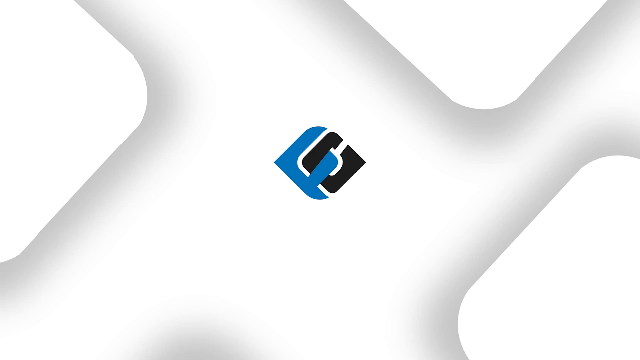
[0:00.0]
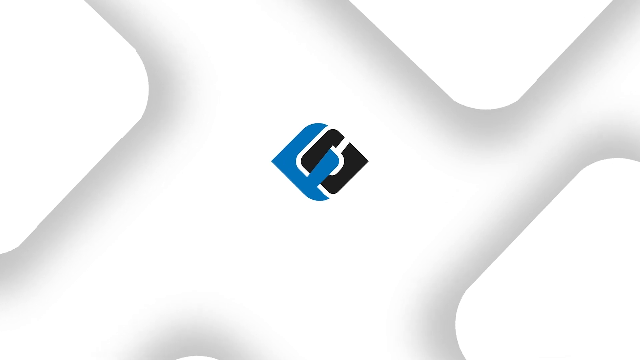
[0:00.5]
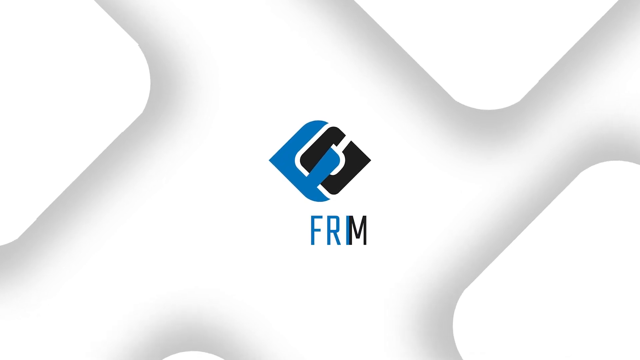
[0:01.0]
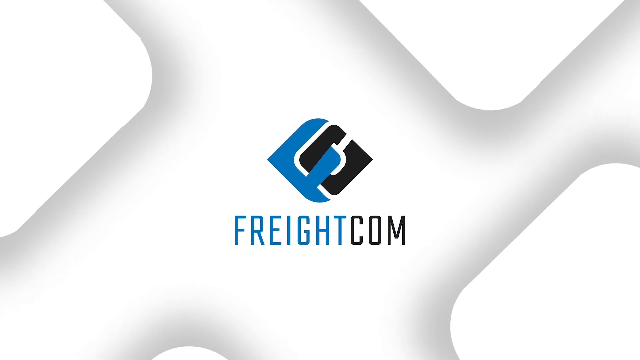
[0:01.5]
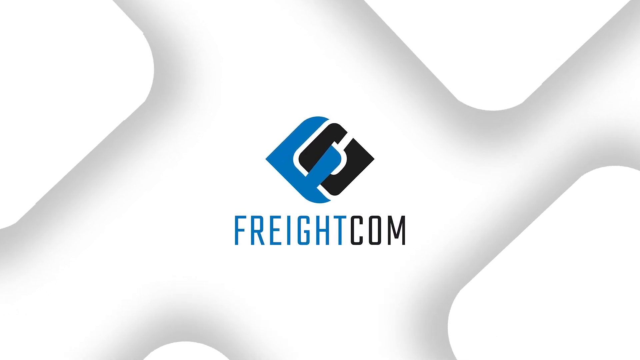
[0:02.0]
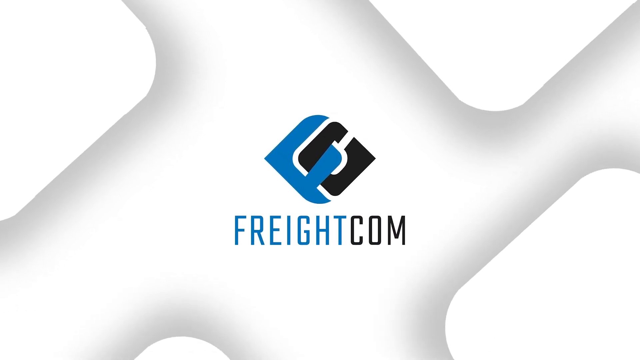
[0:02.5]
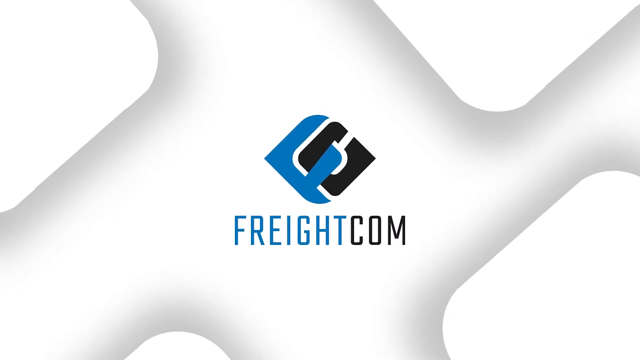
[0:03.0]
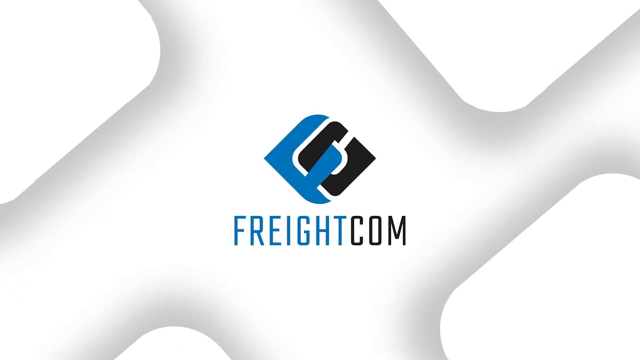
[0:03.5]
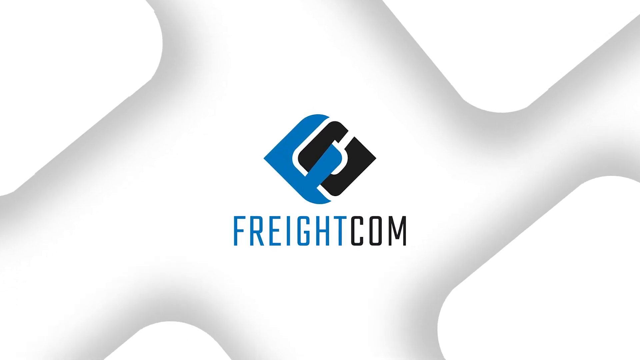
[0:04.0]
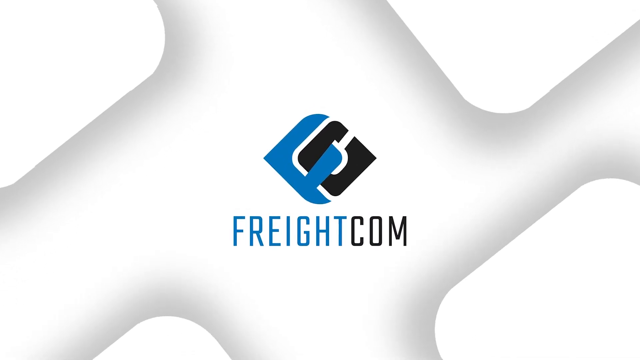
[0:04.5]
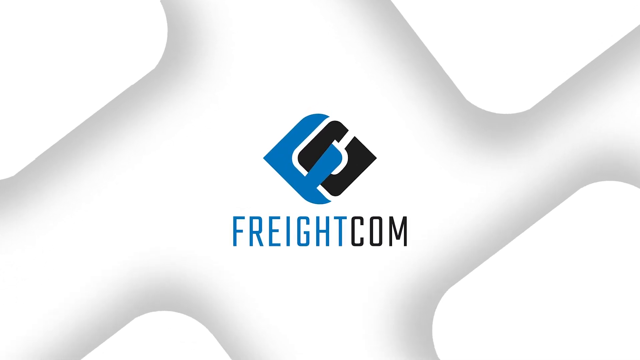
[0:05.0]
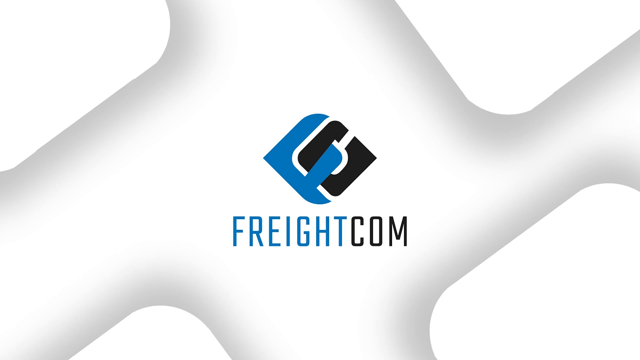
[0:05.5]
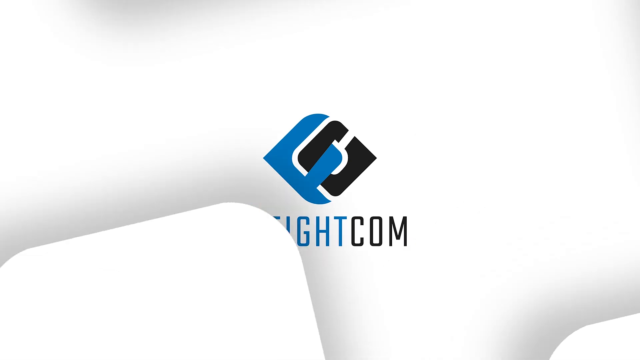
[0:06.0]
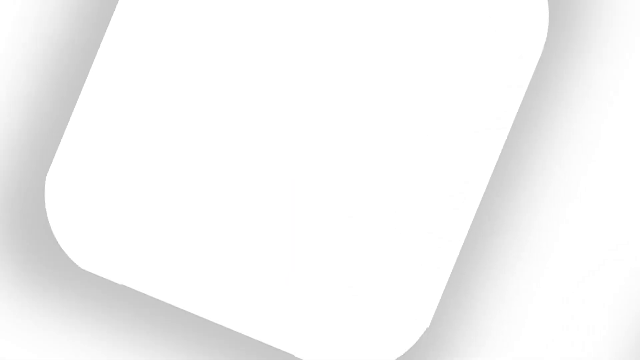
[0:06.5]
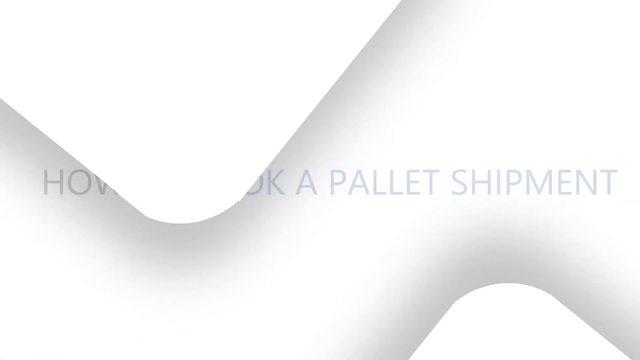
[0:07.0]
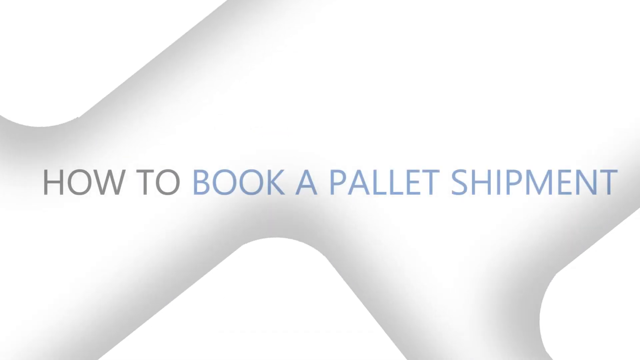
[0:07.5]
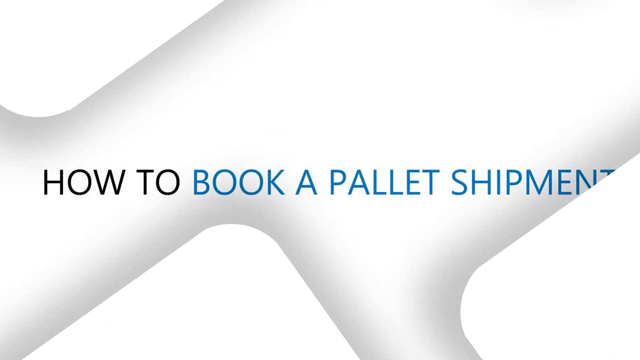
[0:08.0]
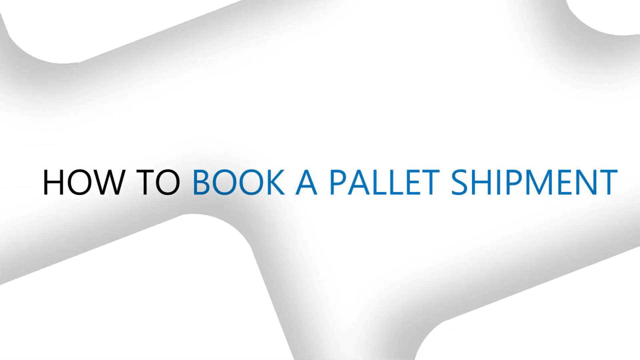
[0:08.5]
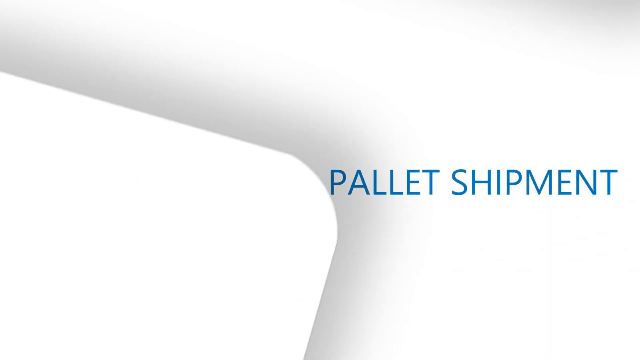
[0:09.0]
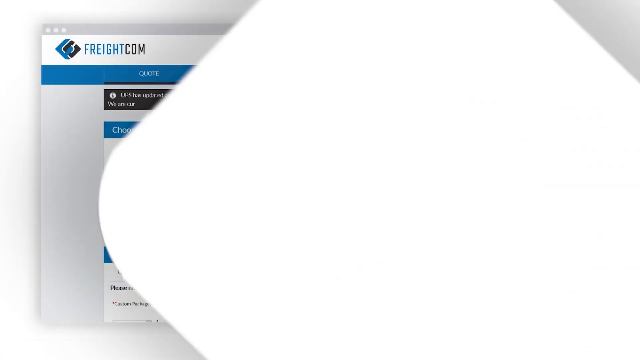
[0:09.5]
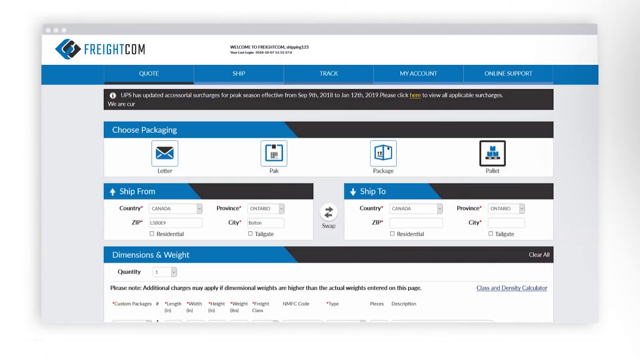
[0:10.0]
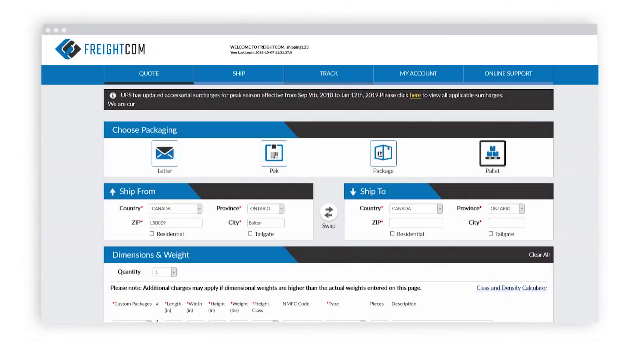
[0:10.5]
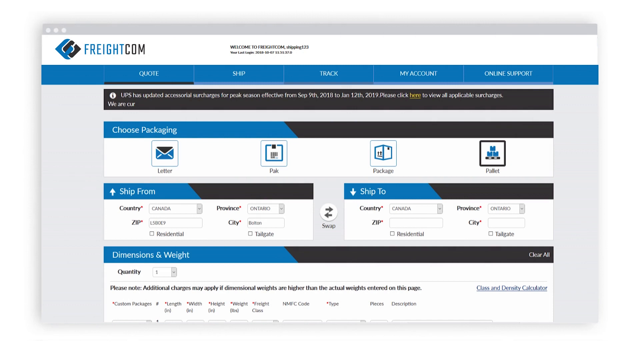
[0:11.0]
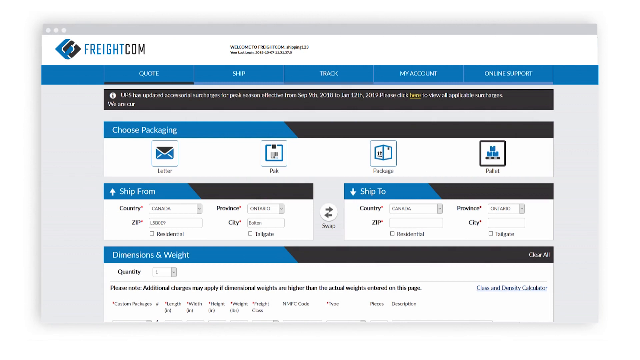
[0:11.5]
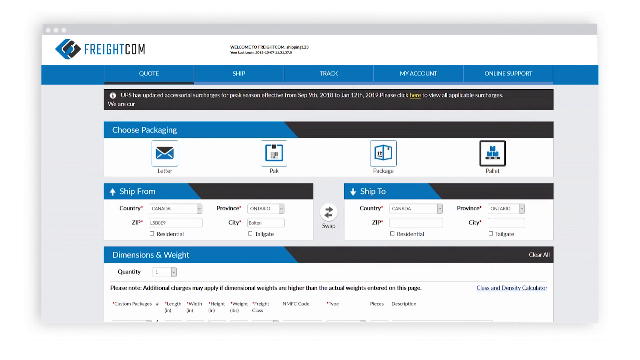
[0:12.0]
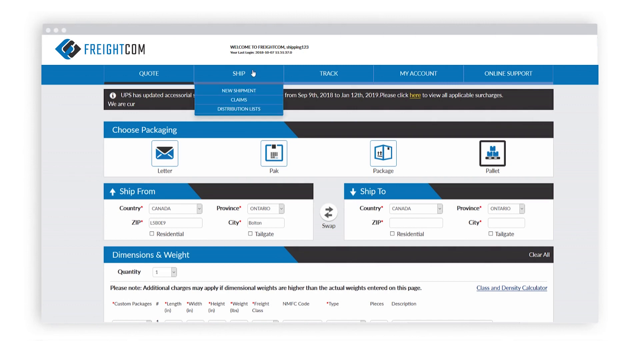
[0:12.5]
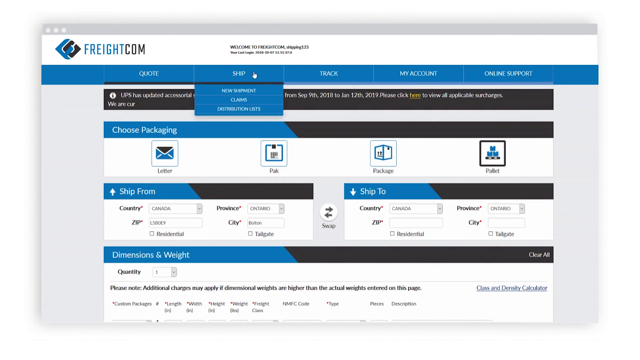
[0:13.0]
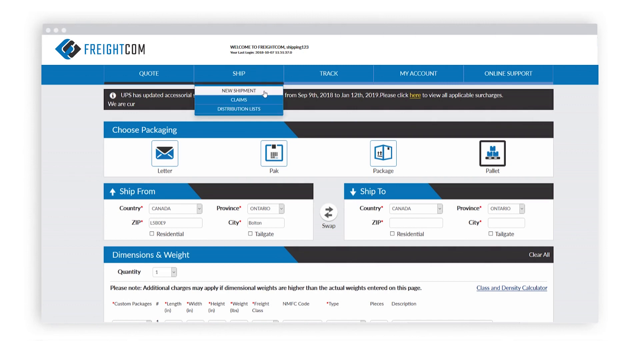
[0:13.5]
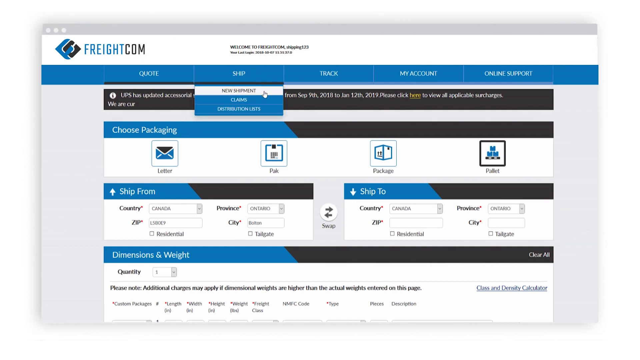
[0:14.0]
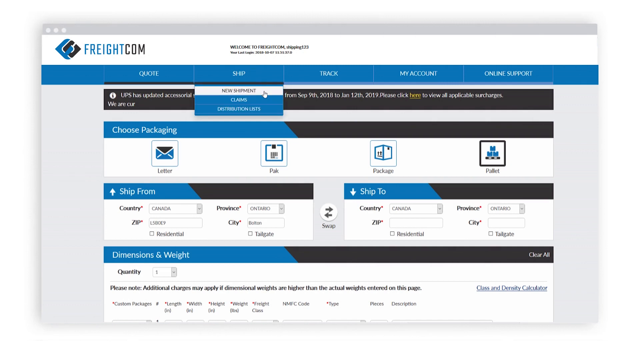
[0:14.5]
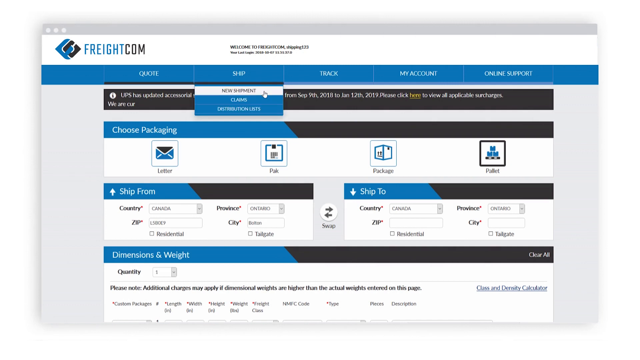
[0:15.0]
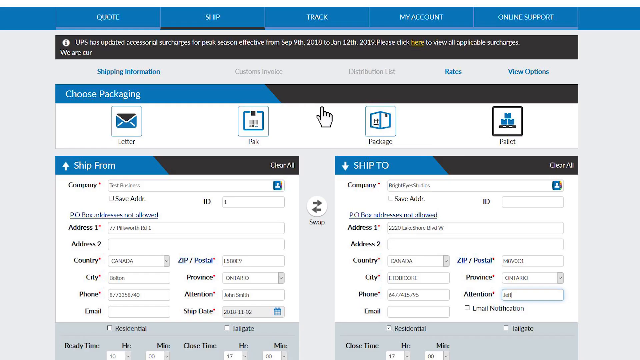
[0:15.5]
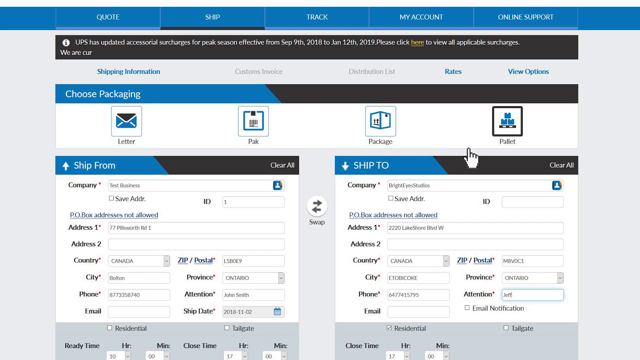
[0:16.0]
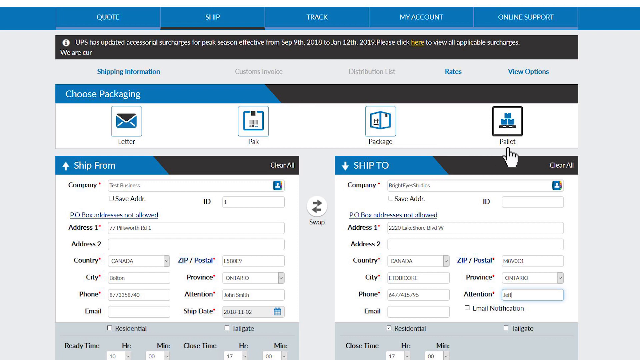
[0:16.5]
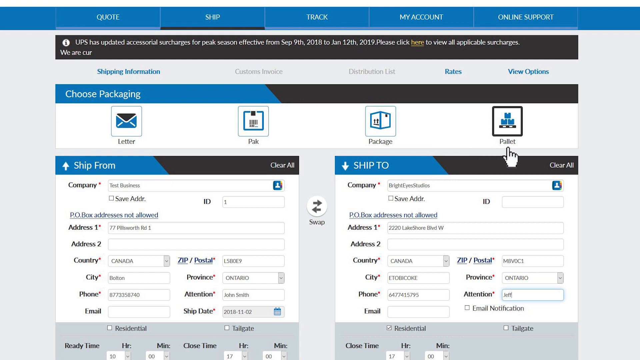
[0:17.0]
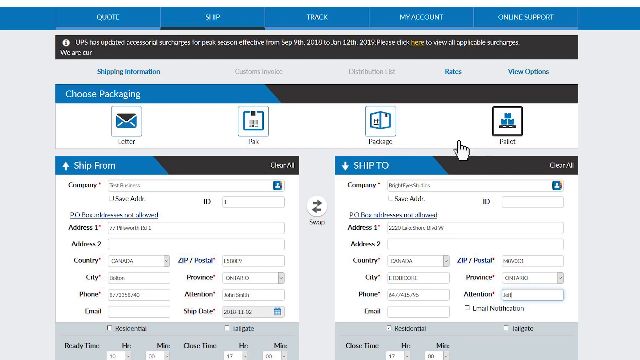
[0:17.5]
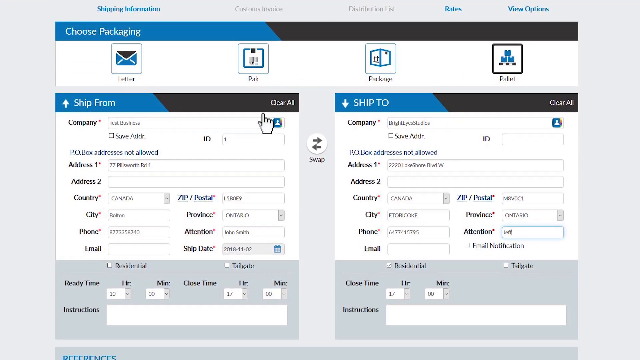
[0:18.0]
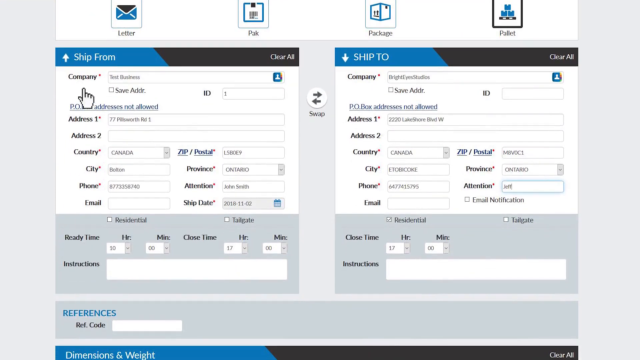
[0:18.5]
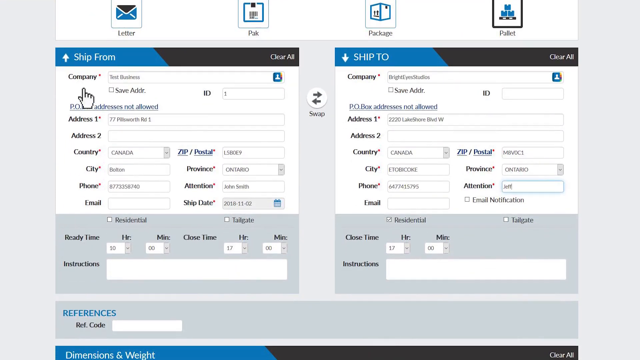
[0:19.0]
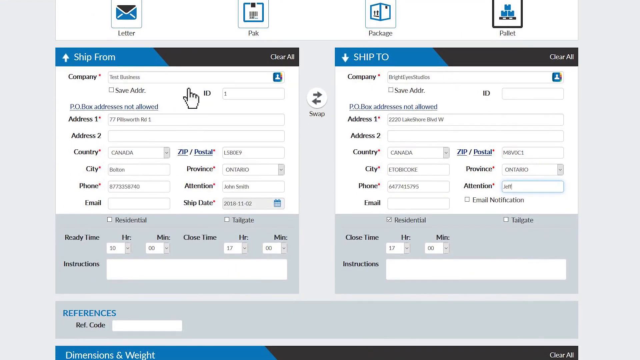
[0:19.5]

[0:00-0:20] A logo appears on the screen: what looks like a sideways "F" in blue block letters, connected to a sideways "C" in black, with the text "Freightcom". The view then changes to a web page made up of different boxes. At the top of each section is a bar that is blue on the left and black on the right. The sections include "Choose Packaging", with four different symbols to choose from, then an area labeled "Ship From", and at the bottom "Dimensions and Weight". Each category has dropdowns, for instance for the country being shipped from, and "Dimensions and Weight" has a quantity dropdown. An arrow shaped like a hand then points to different areas of the web page. The page then changes to two upright rectangular boxes, one on the left and one on the right, showing choices for shipping from and to, with address boxes to fill in.